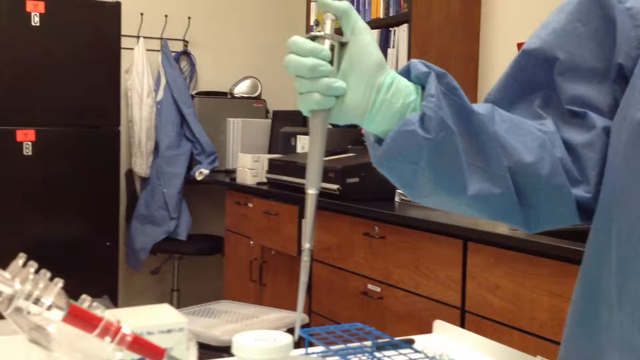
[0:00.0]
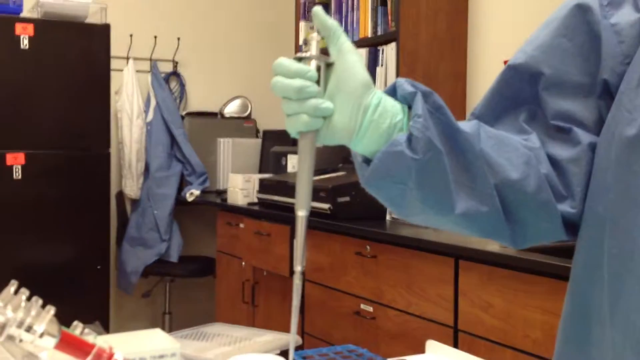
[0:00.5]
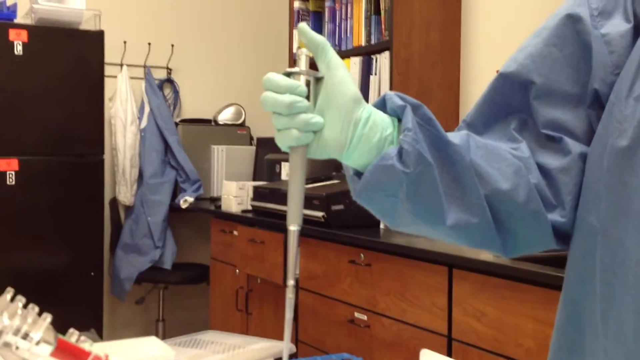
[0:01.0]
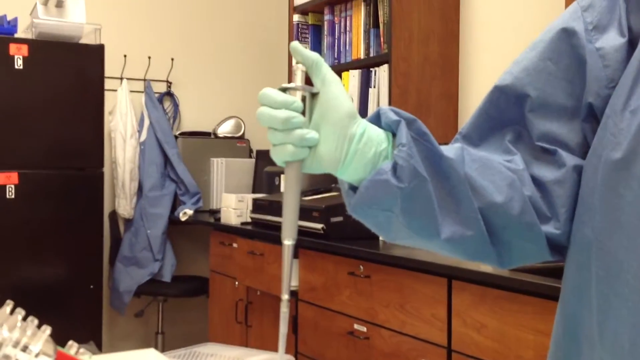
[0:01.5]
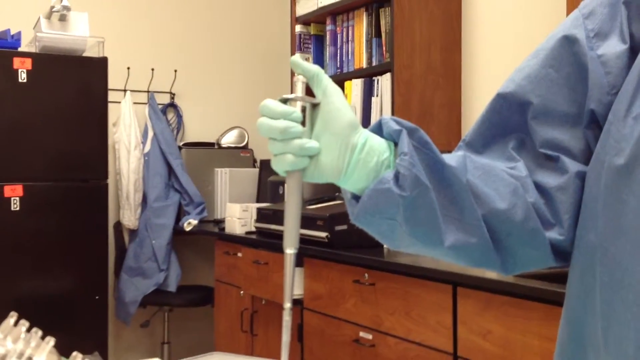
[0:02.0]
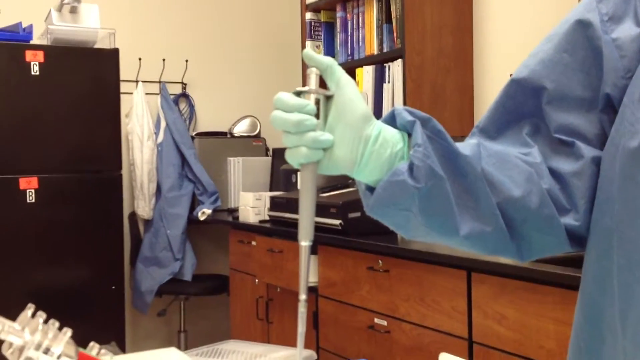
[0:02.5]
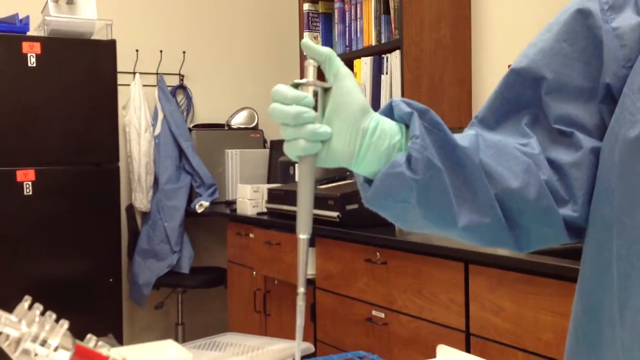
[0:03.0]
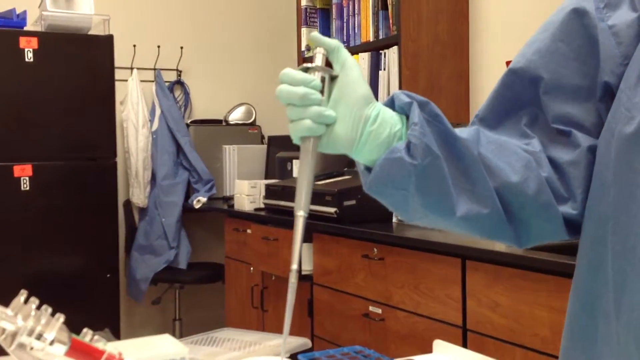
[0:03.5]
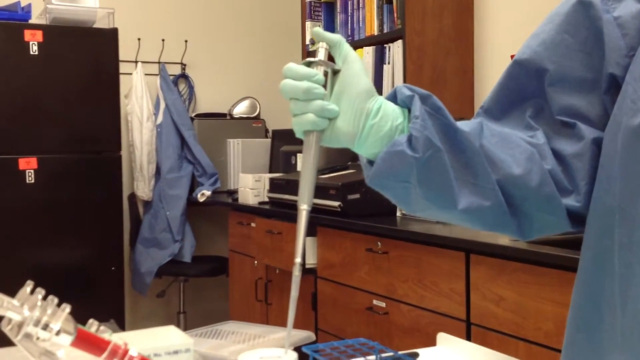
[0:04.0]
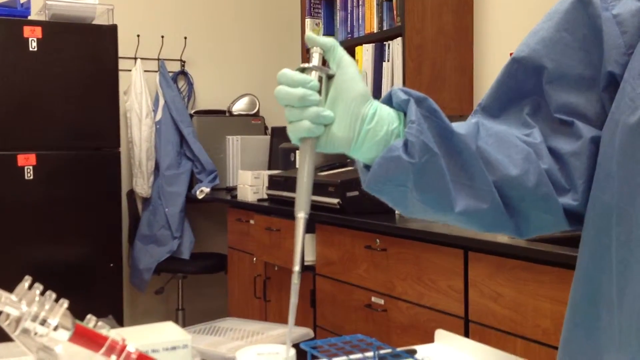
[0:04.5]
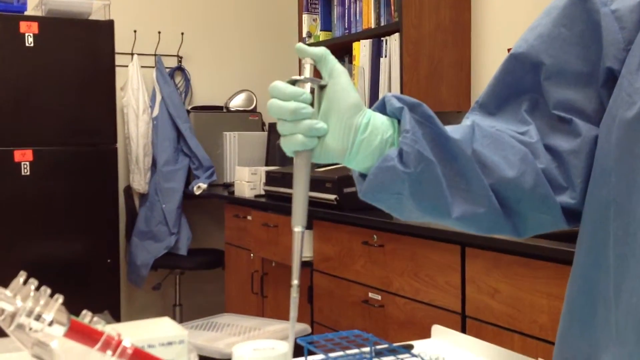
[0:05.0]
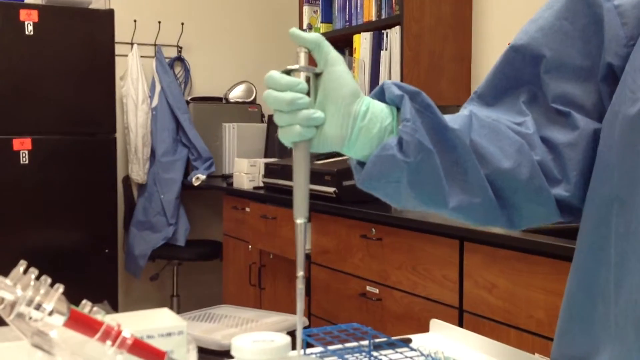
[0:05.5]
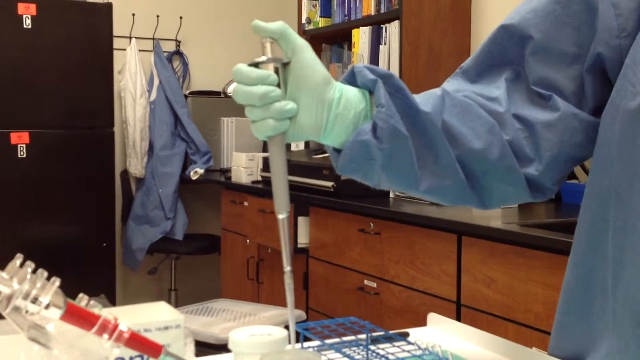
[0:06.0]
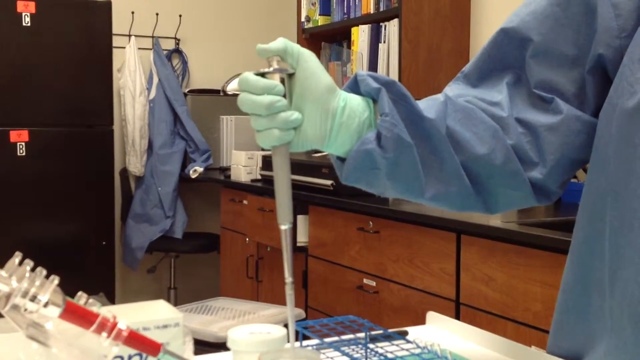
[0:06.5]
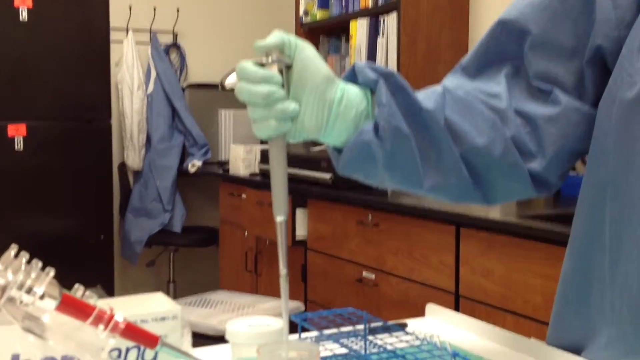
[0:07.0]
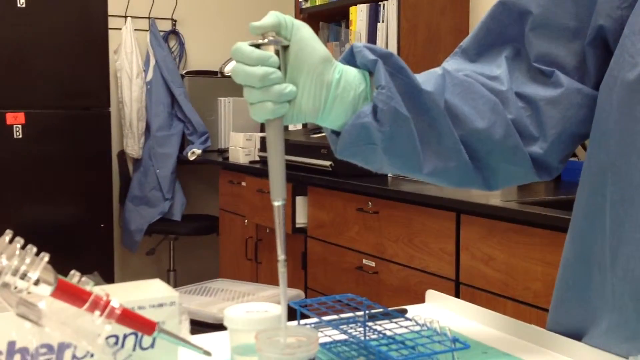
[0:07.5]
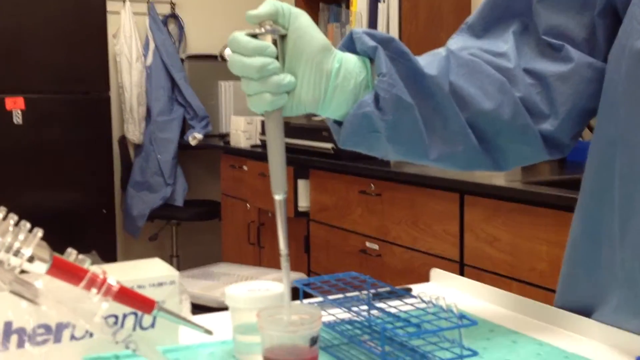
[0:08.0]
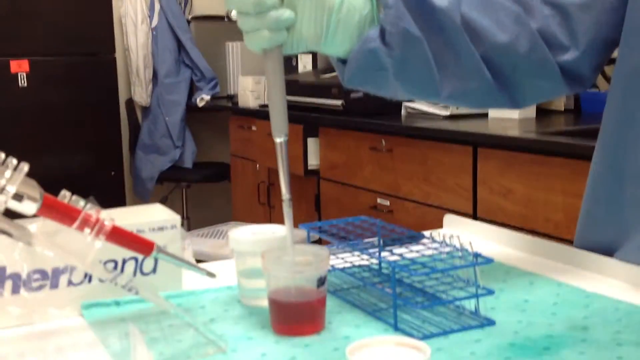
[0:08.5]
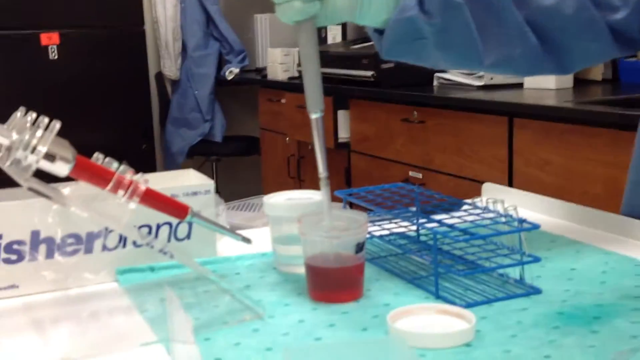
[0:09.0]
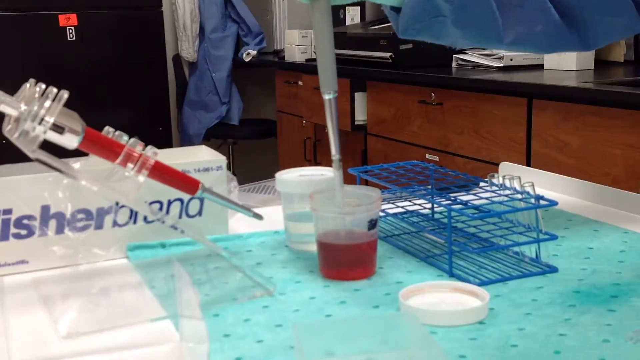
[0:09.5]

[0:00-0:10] The setting appears to be a medical office. On the right of the screen, someone in a blue scrub gown holds a medical instrument in their right hand, which is gloved in a pale green glove, with the instrument at the center of the screen. In the background, other medical clothing hangs on a clothes rack, along with various pieces of equipment, and on the left there is what looks like a locker. The man pushes down a button on the top of an injector and injects something into containers sitting on a table in front of him. Several test tubes are sitting on the table, along with trays and two containers with lids. One container has its lid on, while the other is unlidded, with the lid right beside it.